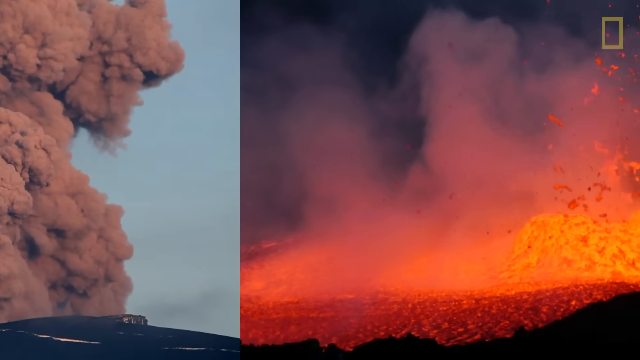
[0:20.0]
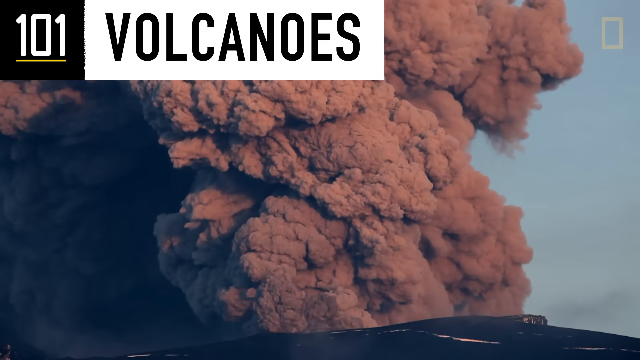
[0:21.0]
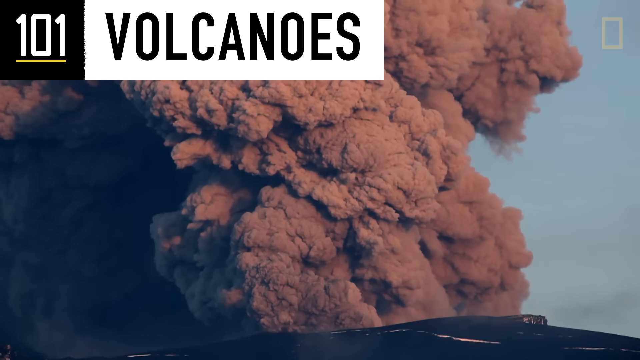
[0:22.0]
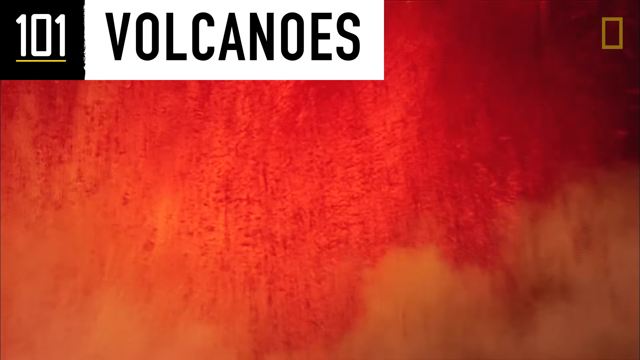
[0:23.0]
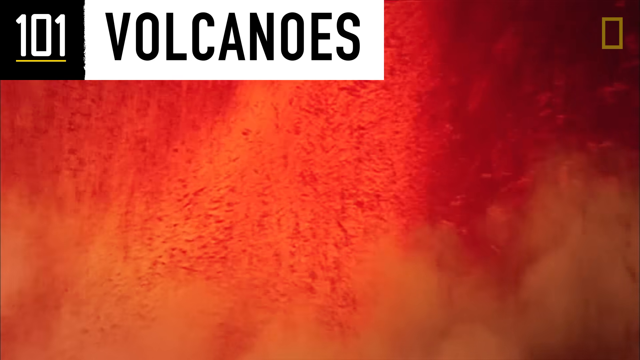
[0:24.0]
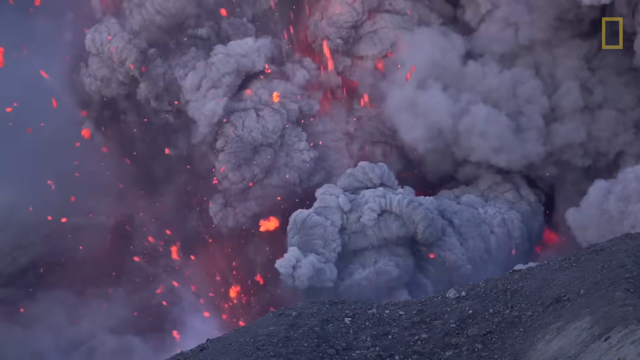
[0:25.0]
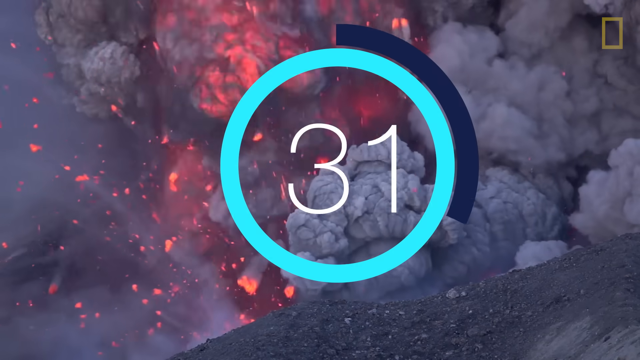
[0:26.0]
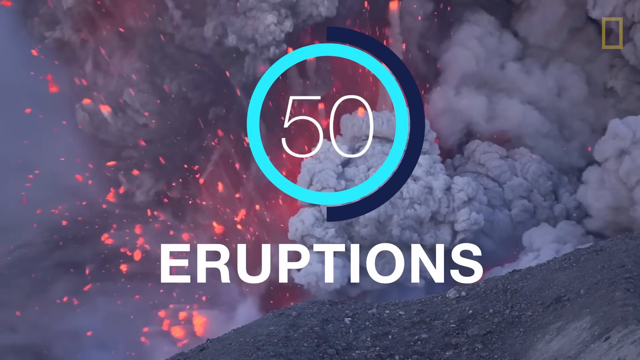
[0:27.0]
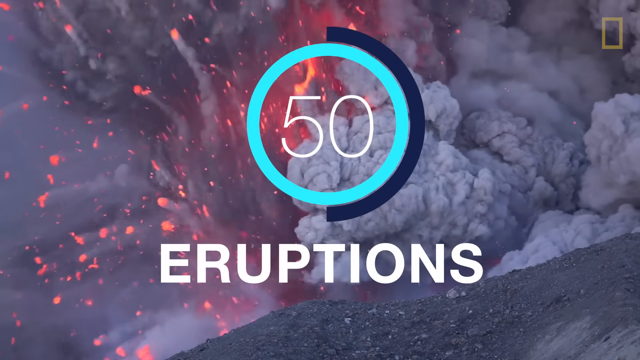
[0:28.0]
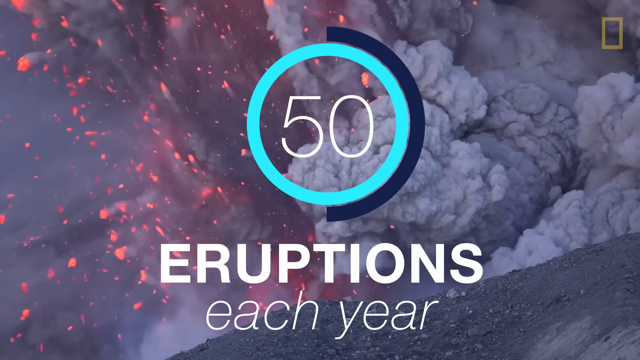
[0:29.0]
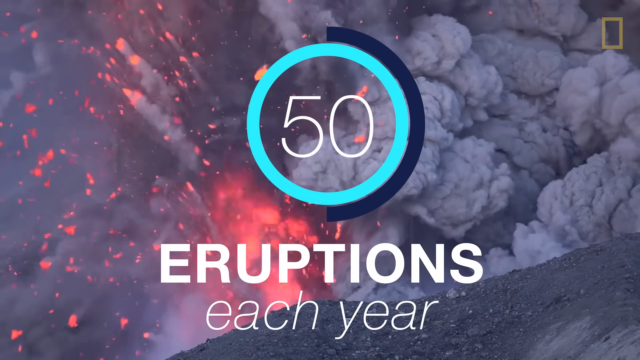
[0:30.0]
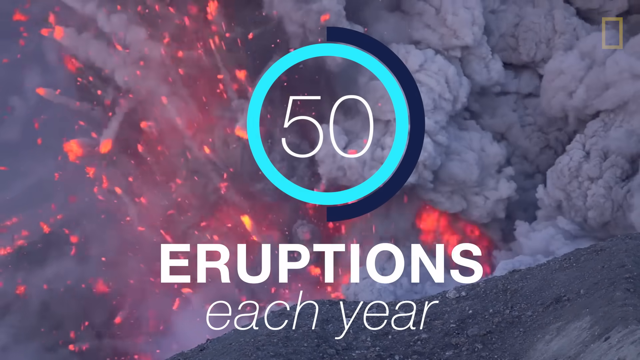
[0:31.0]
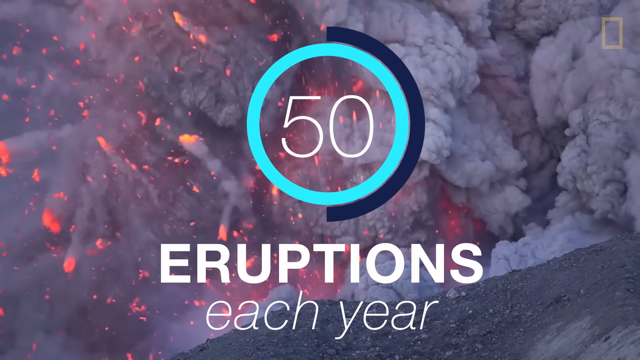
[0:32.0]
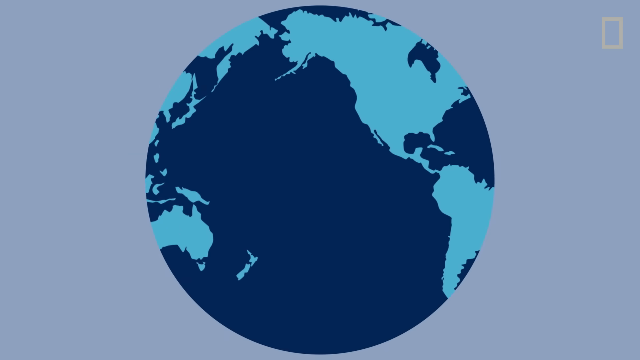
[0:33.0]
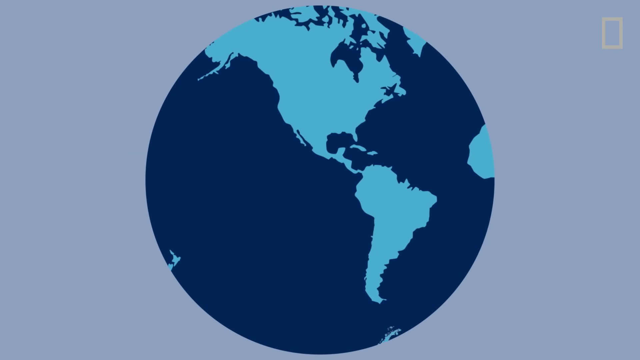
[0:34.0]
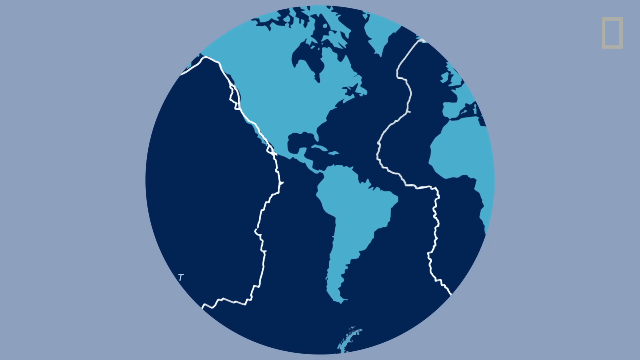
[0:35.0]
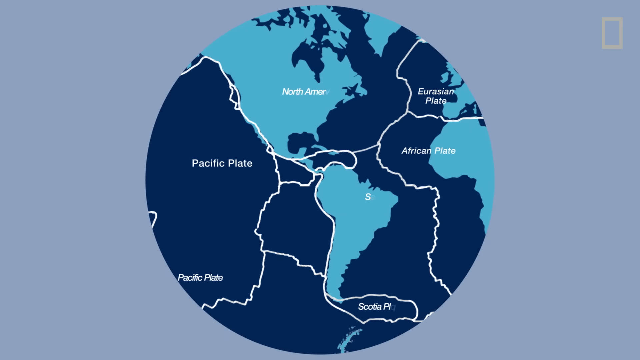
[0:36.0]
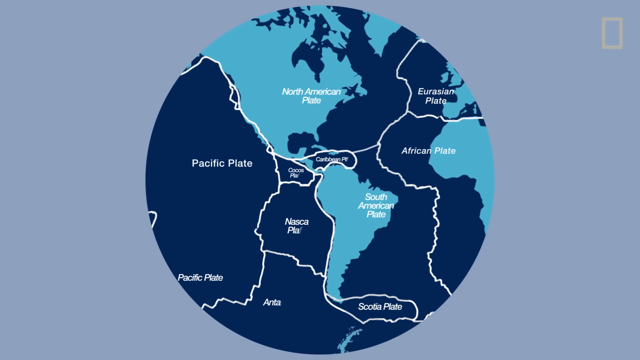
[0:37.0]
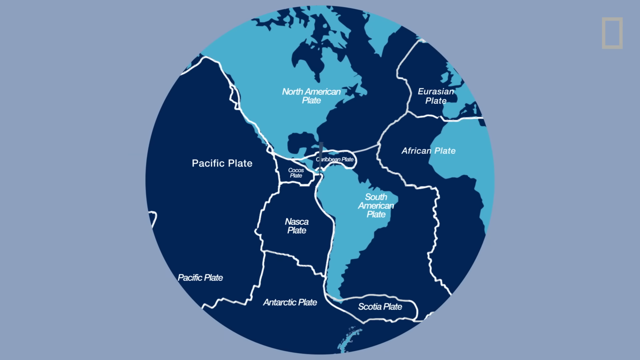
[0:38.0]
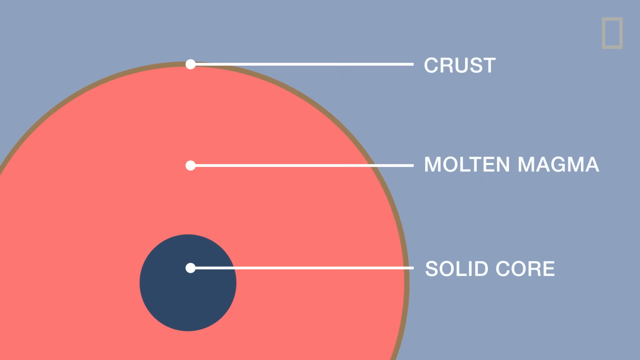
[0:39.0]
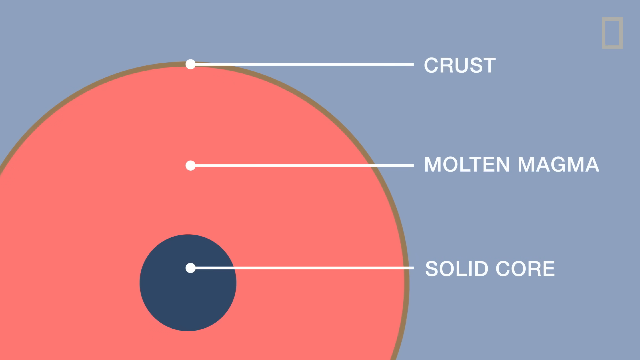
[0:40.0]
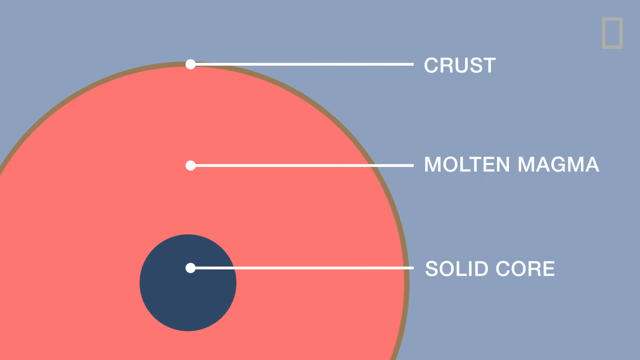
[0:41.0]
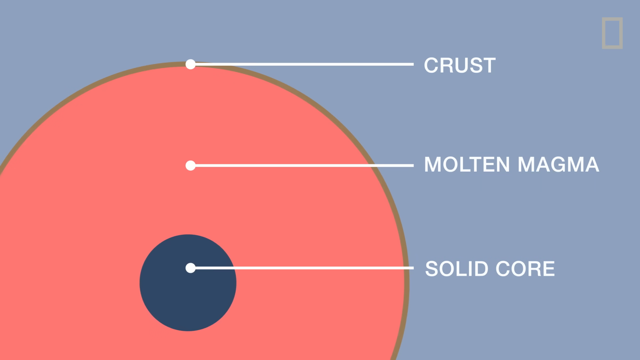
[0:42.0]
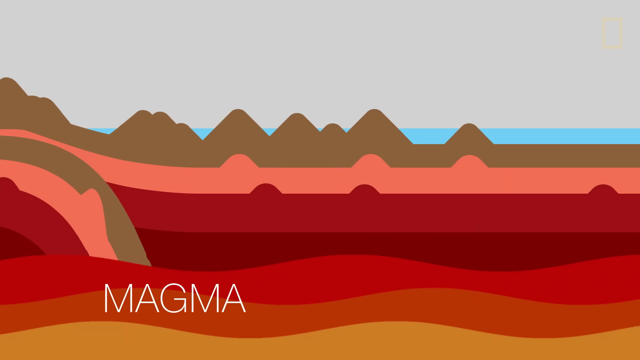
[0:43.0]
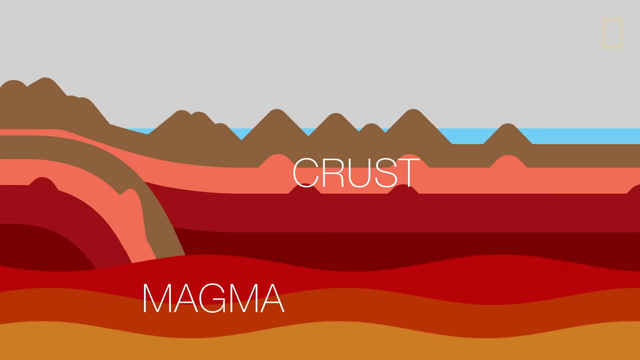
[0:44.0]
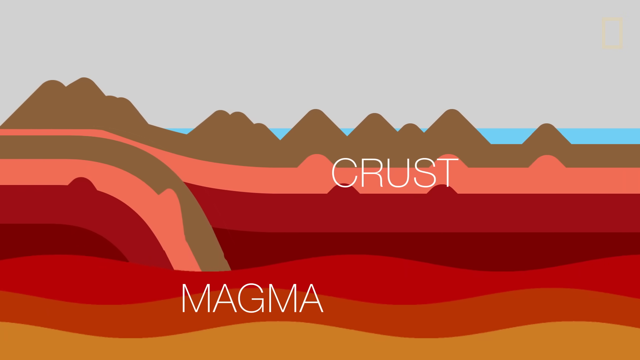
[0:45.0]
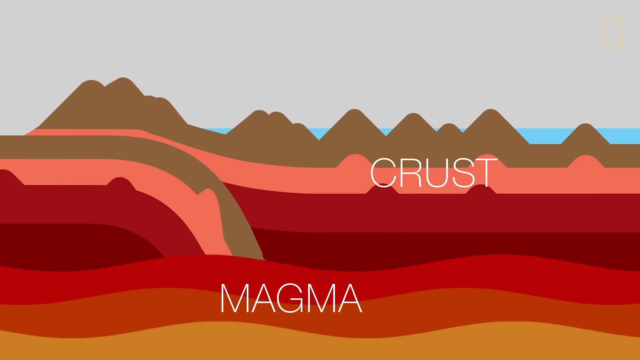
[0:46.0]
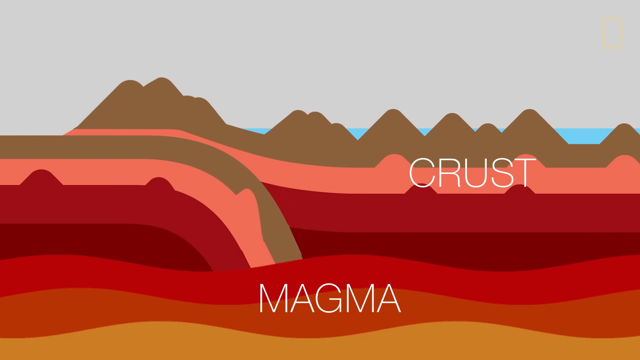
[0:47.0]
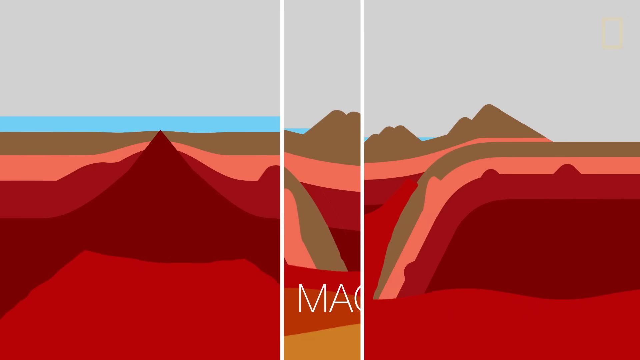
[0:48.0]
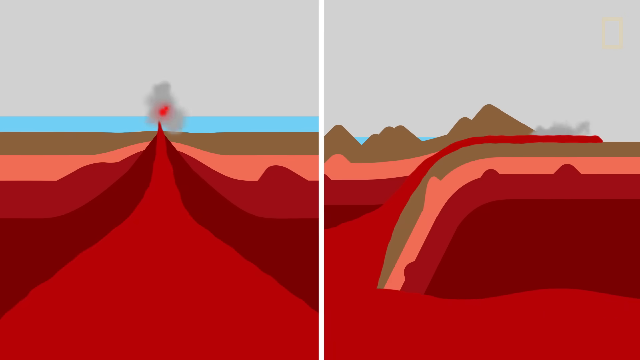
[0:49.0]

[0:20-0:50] A strip about two inches wide on the right side shows blue sky from top to bottom, and the rest of the frame to the left is thick, dark smoke. In the left corner, "101" appears in a black square box, and to its right is a white rectangle with black lettering reading "volcanoes". The whole screen then fills with lava shooting up, yellow, red and orange-ish in color. In the center appears the number "50" in white, with a light blue circle border around it and a dark blue half circle on the right side; beneath it in white is the word "eruptions". The background is rolling smoke with orange lava shooting up in the center. Next comes a shot of the globe with North America and South America in the center, and divider lines appear, separating sections on the map. A half-circle on the left side extends over to the right, with a green border, then thick pink, then a blue circle; to the right, arrows point to each of these layers, labeling what they are. Another diagram follows in green, pink and red, with blue sky across the bottom and "magma" in white; moving to the left, there is crust.